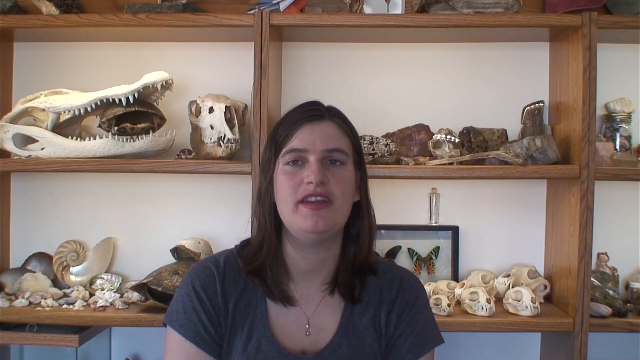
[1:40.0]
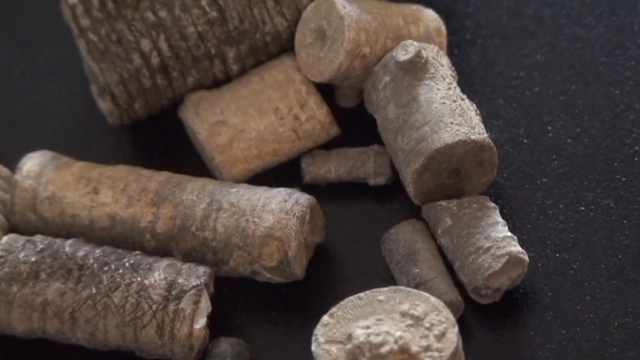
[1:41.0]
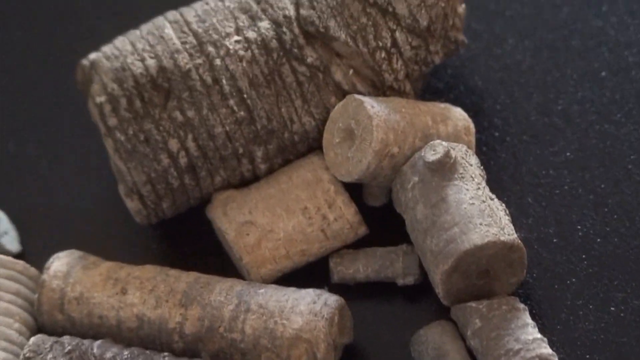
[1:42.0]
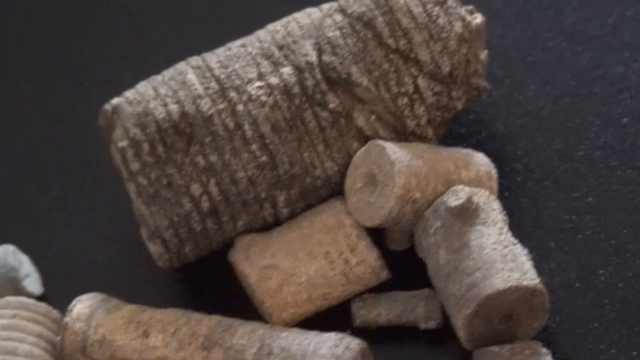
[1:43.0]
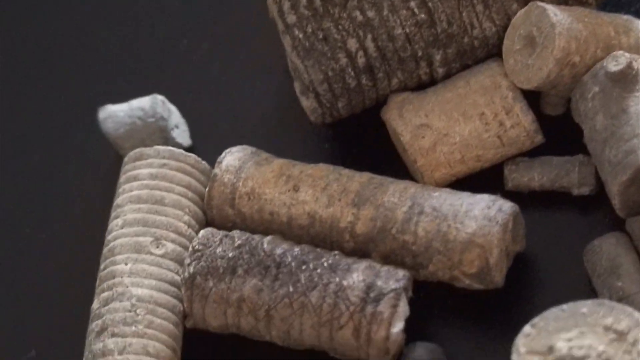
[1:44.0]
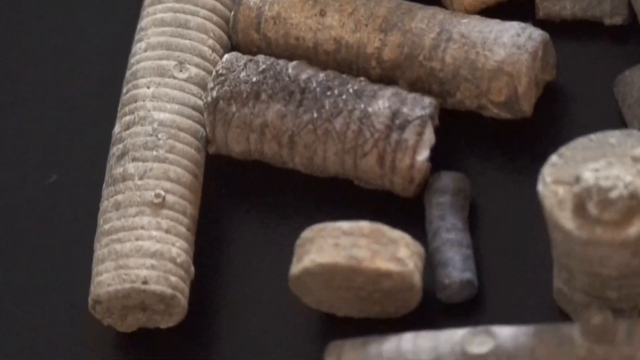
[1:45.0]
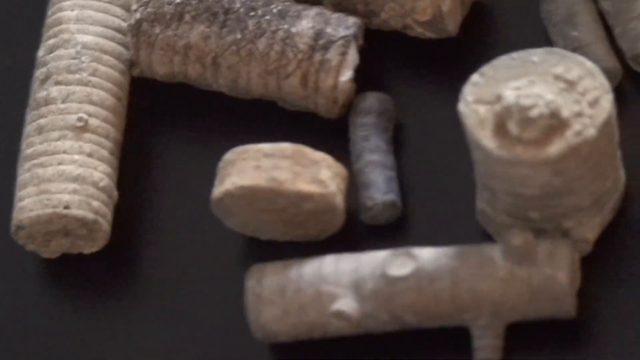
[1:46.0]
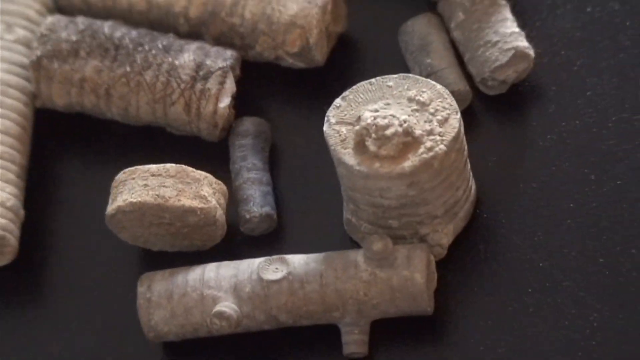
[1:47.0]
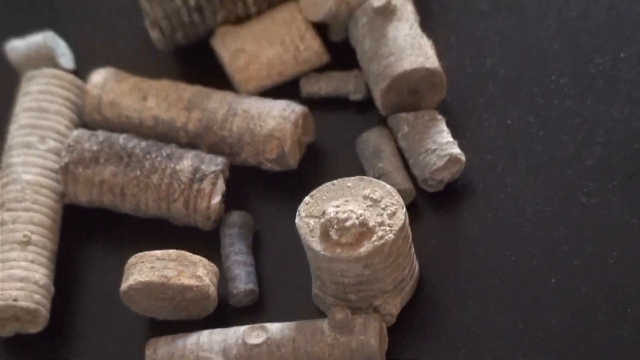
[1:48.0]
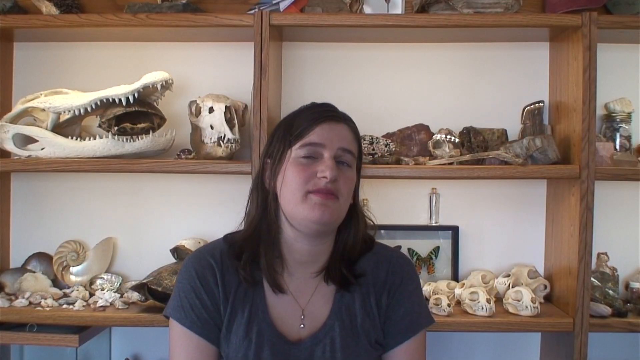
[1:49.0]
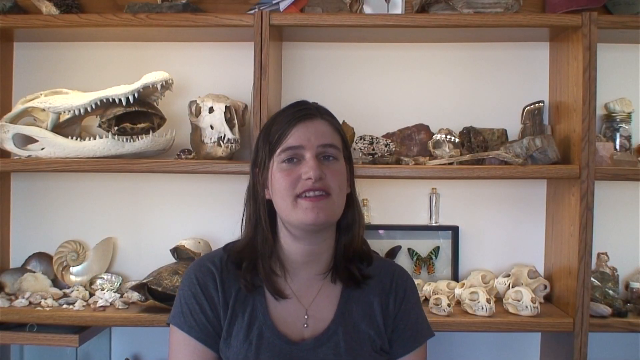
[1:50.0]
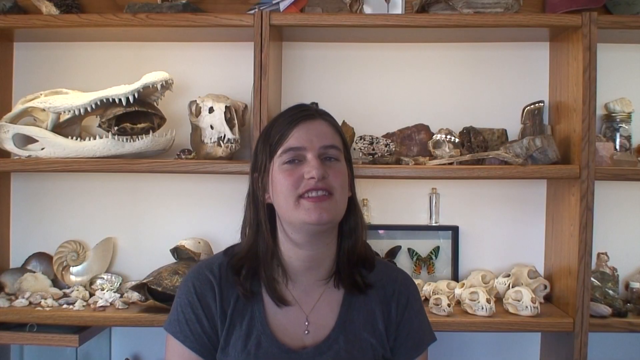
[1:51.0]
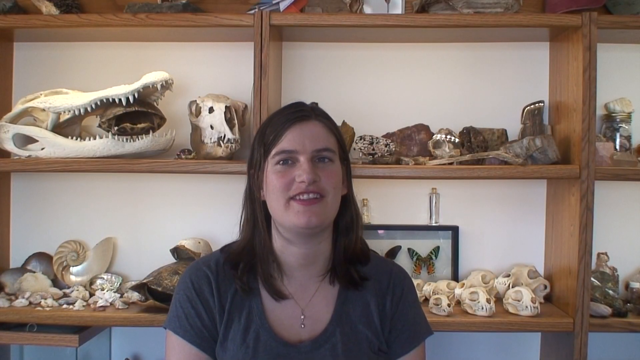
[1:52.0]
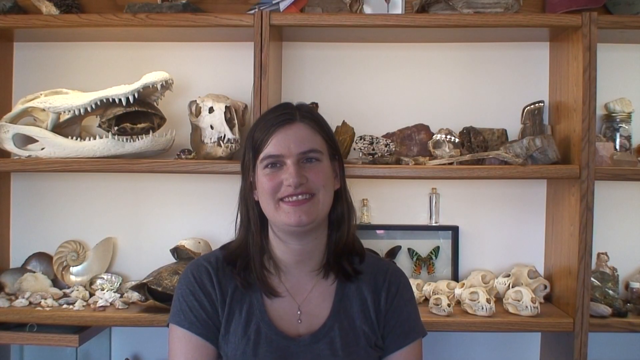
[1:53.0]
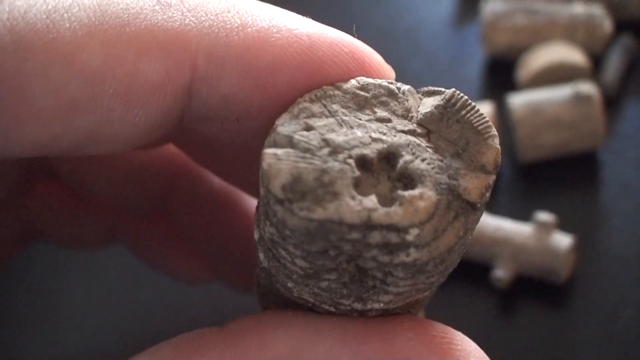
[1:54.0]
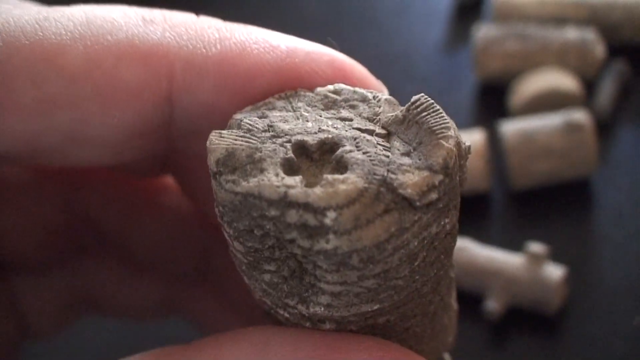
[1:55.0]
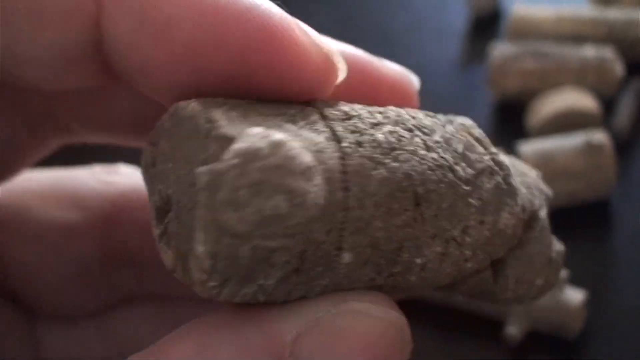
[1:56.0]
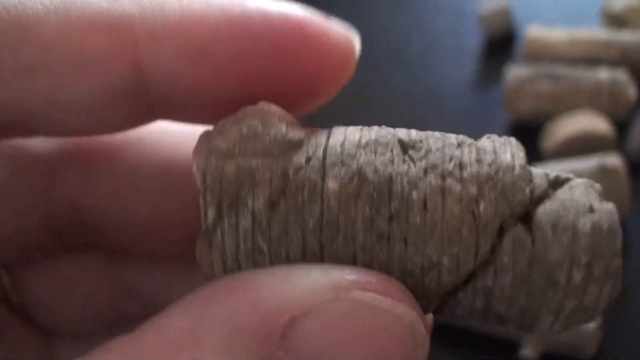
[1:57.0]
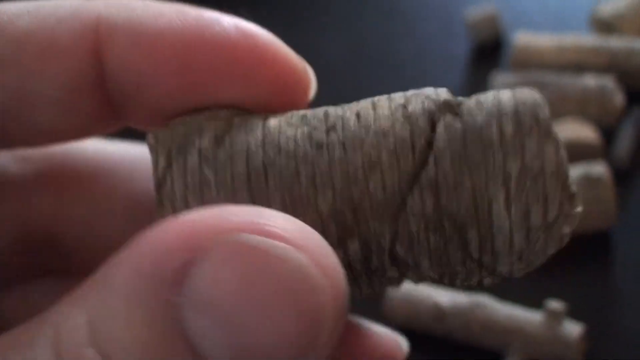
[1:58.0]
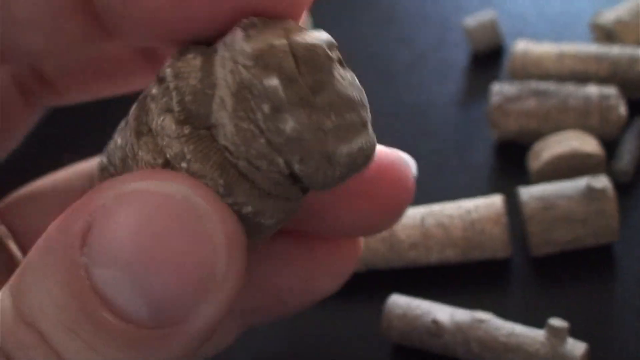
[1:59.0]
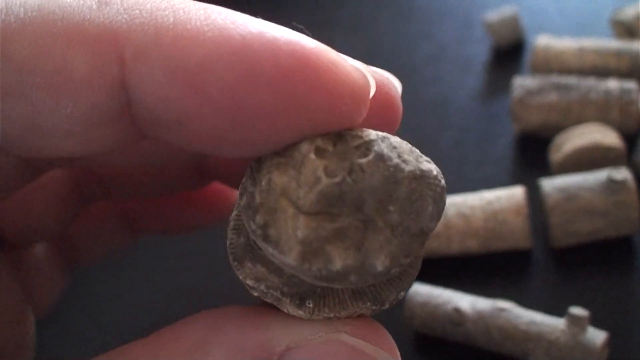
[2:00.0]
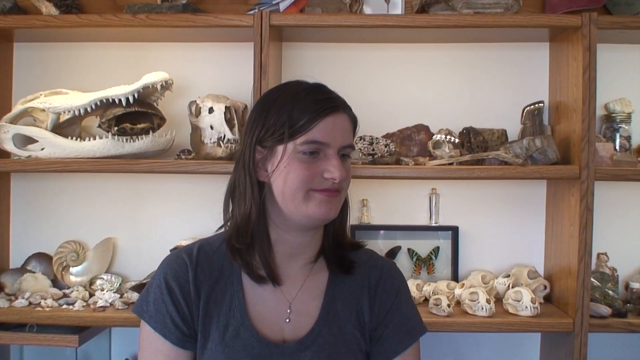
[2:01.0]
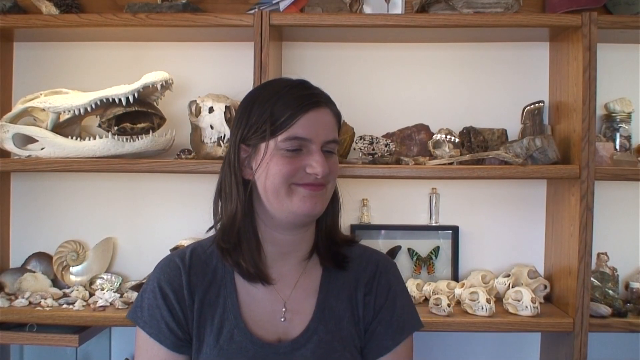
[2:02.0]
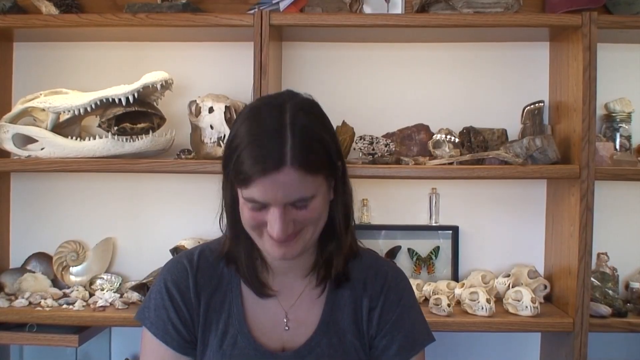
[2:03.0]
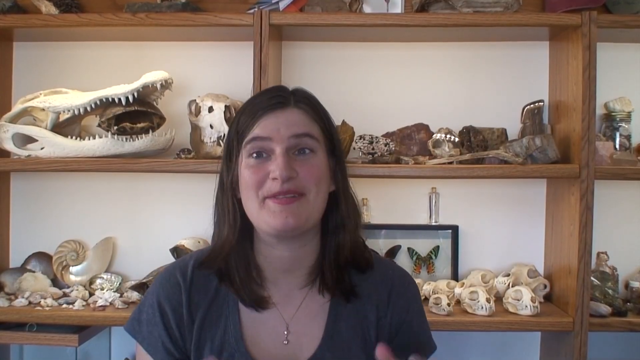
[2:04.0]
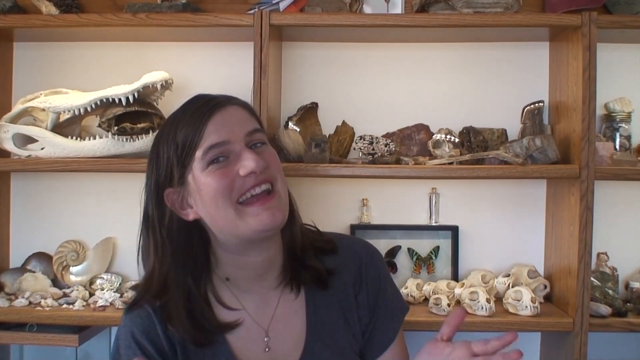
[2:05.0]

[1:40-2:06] The woman is still standing in the center of the screen, wearing her gray t-shirt, with her long straight dark hair parted in the center. Behind her are many wooden shelves containing skulls, rocks, fossils and other oddities. She continues to look at the camera while talking. The screen transitions to more crinoid fossils lying on a table, with the camera moving to show them, then returns to the speaker. Next, someone holds a fossil with a divot in the center that kind of looks like a flower, moving it around to show it from different angles. The screen returns to the speaker, who talks, laughs and jokes as the video ends.